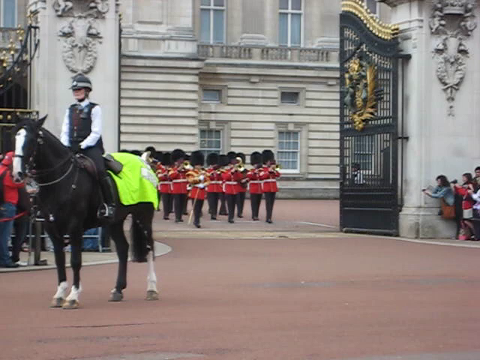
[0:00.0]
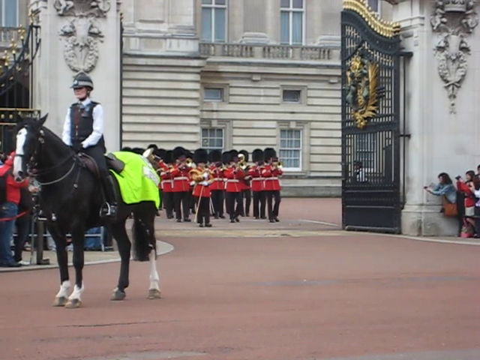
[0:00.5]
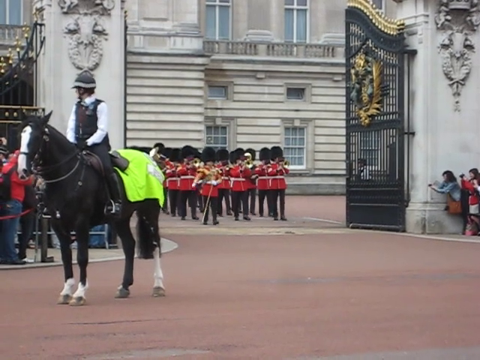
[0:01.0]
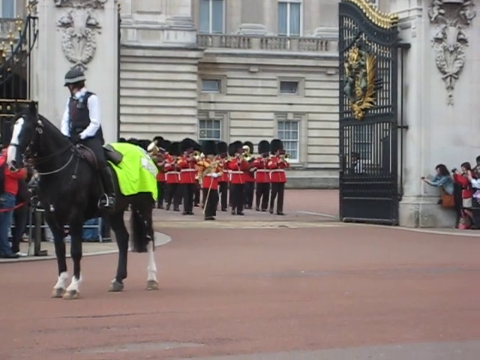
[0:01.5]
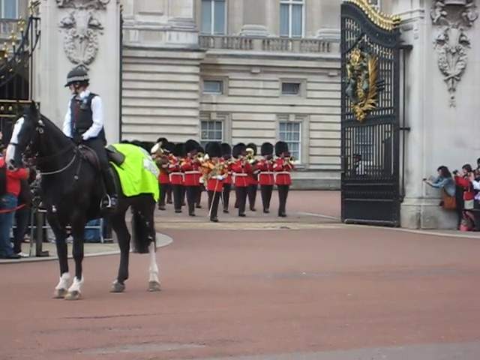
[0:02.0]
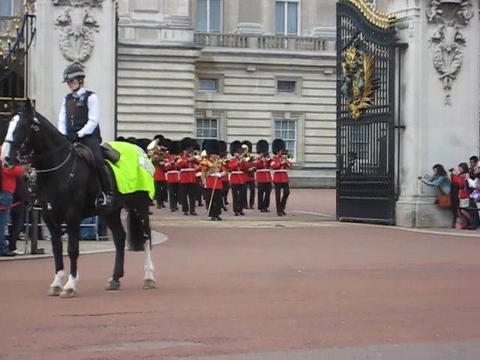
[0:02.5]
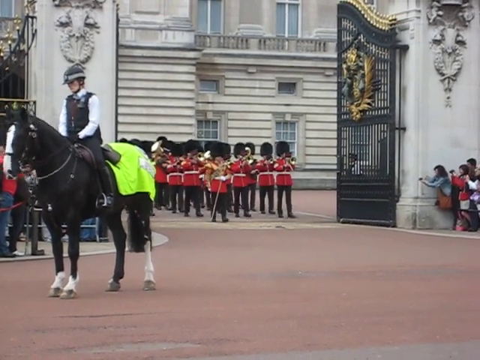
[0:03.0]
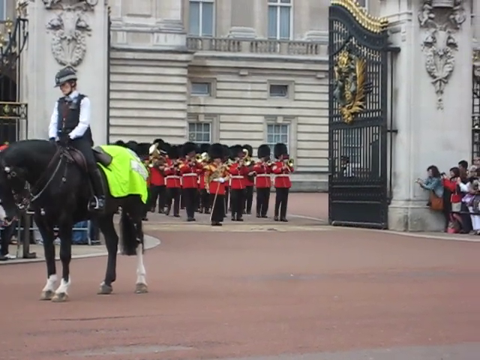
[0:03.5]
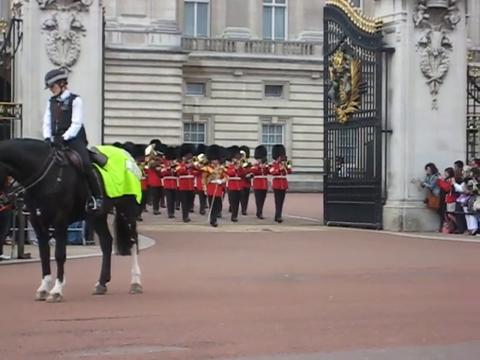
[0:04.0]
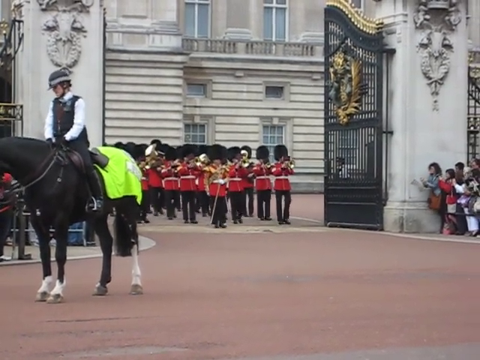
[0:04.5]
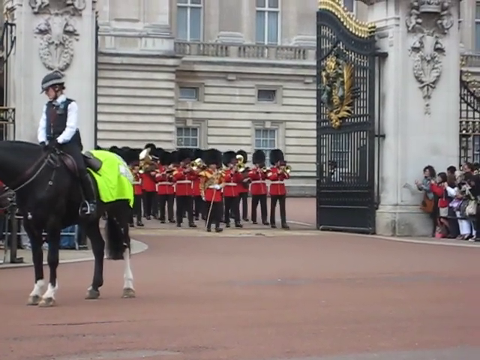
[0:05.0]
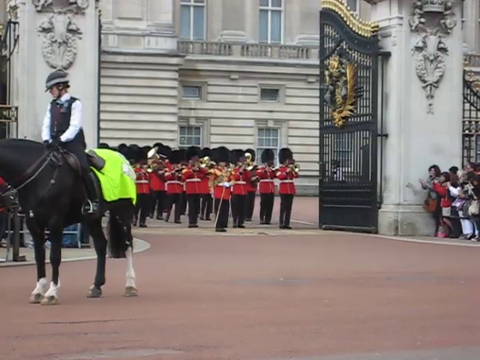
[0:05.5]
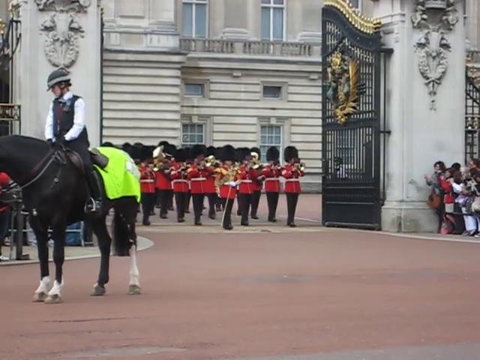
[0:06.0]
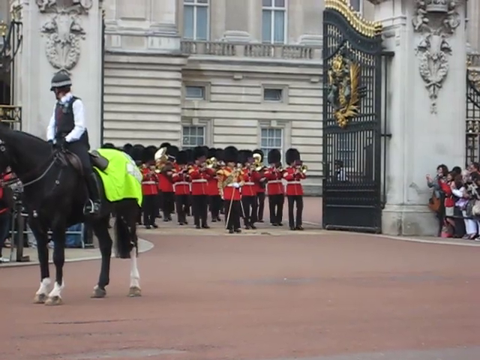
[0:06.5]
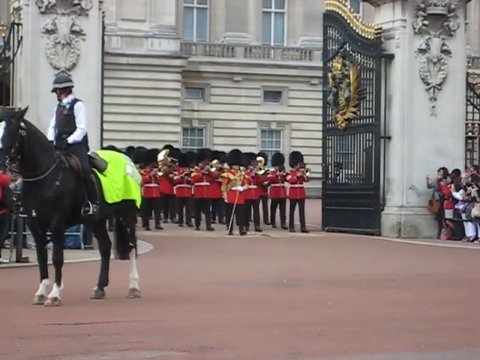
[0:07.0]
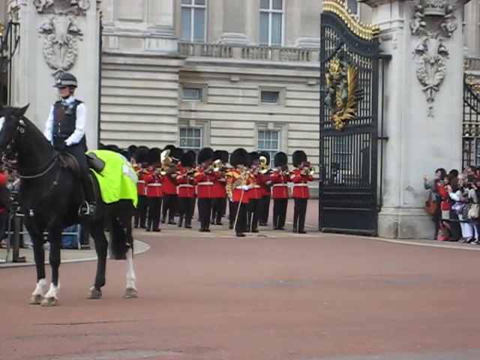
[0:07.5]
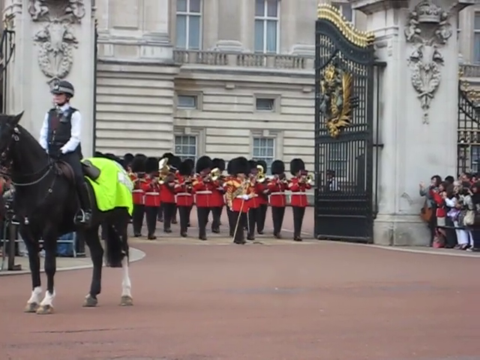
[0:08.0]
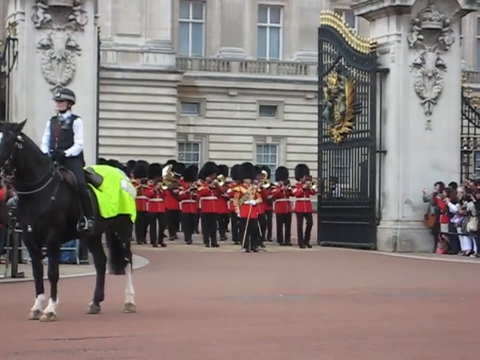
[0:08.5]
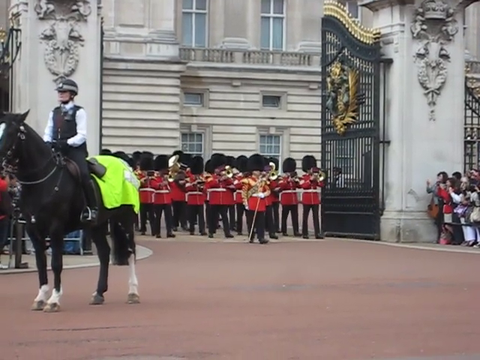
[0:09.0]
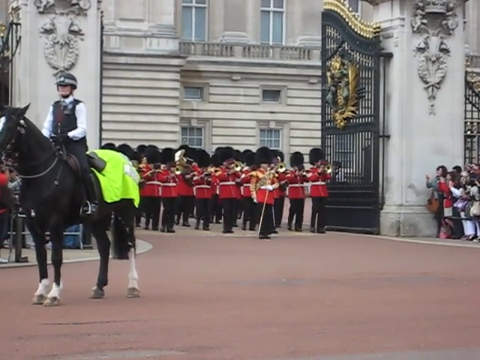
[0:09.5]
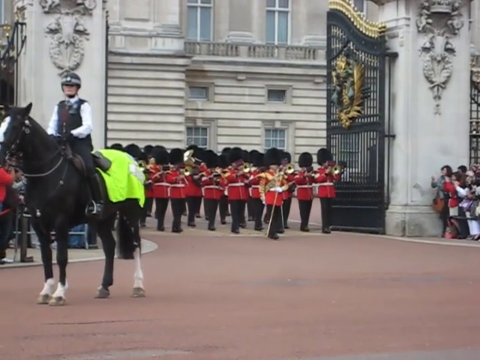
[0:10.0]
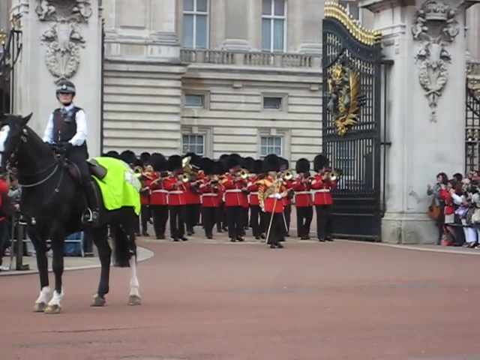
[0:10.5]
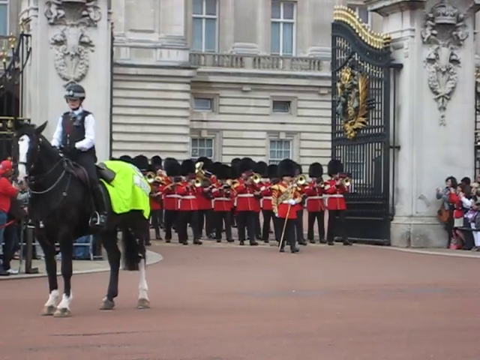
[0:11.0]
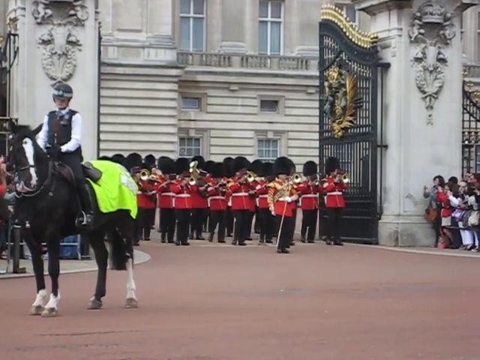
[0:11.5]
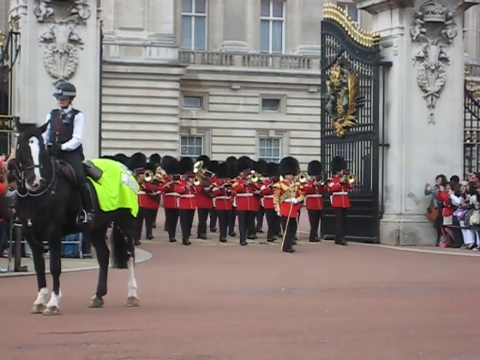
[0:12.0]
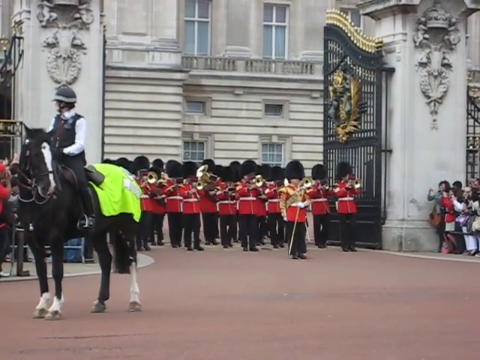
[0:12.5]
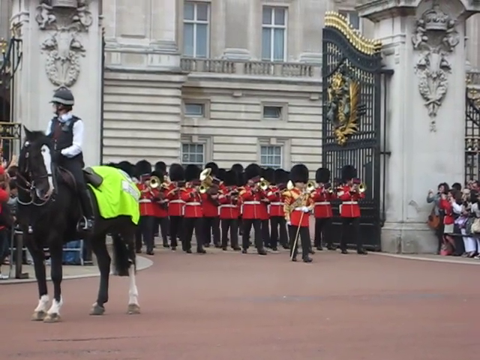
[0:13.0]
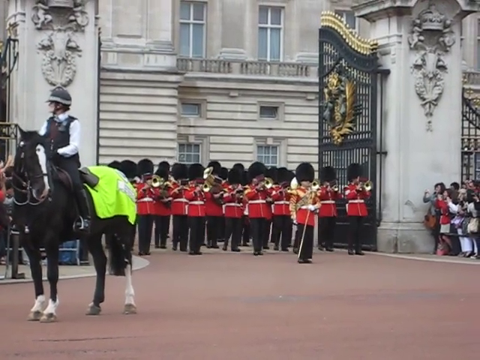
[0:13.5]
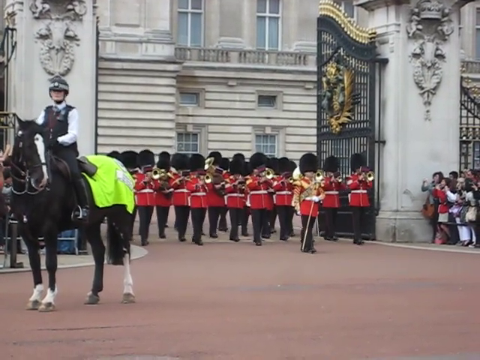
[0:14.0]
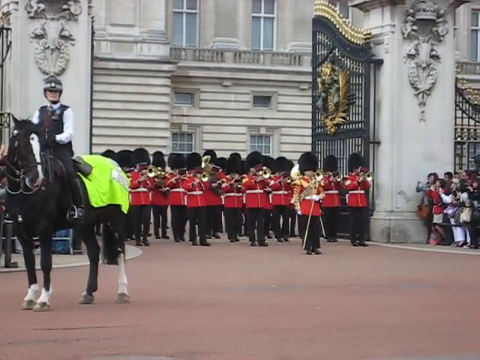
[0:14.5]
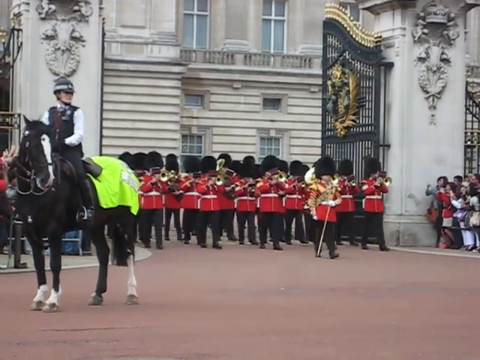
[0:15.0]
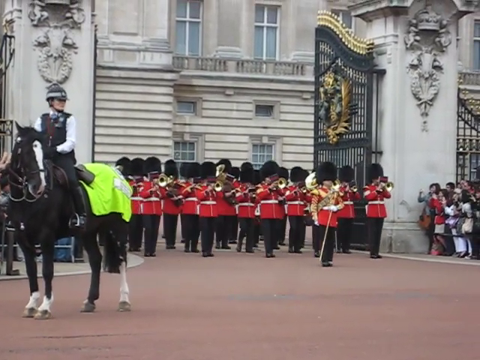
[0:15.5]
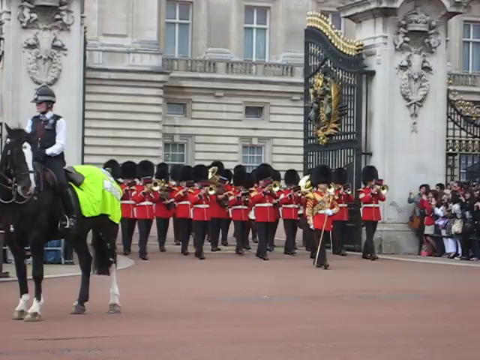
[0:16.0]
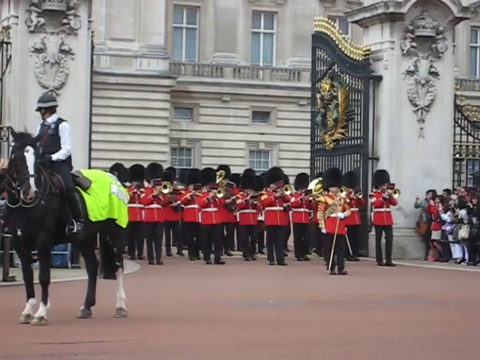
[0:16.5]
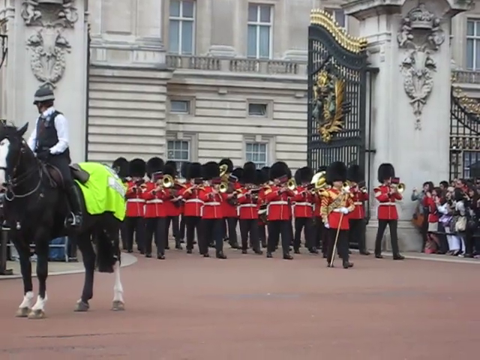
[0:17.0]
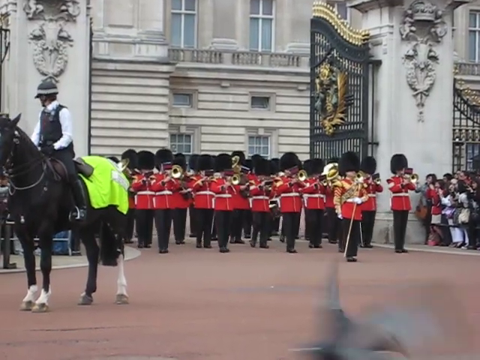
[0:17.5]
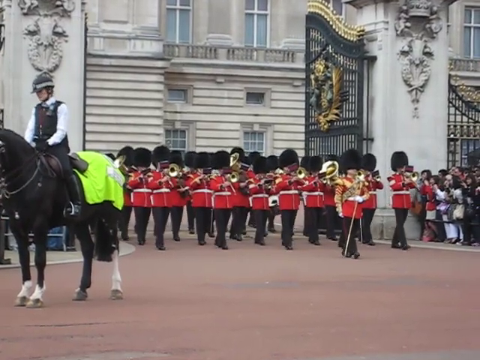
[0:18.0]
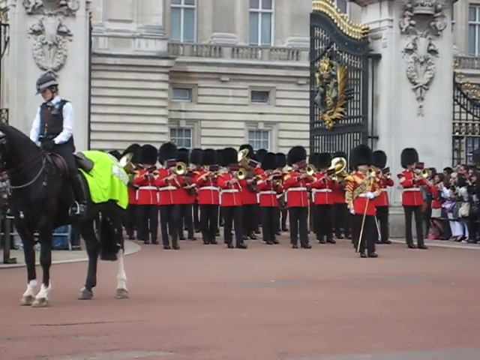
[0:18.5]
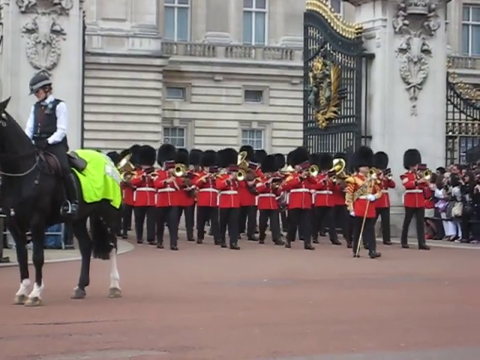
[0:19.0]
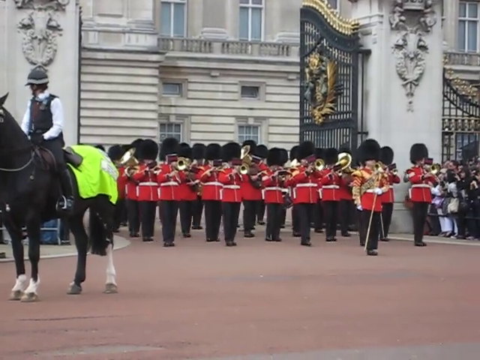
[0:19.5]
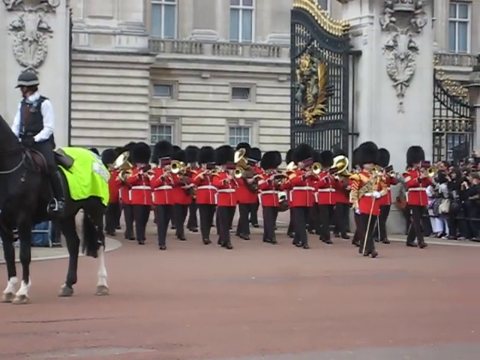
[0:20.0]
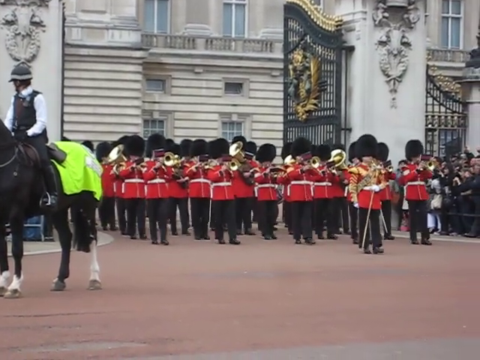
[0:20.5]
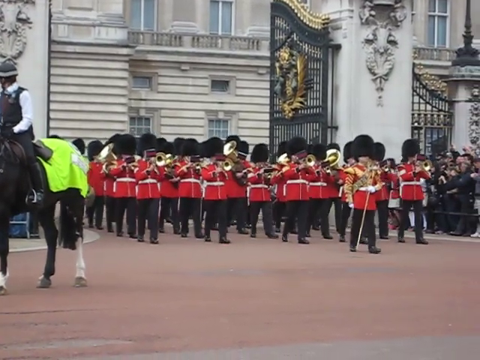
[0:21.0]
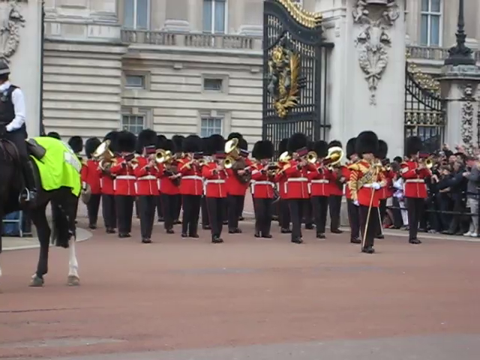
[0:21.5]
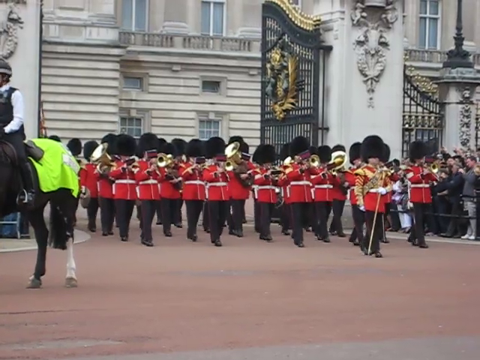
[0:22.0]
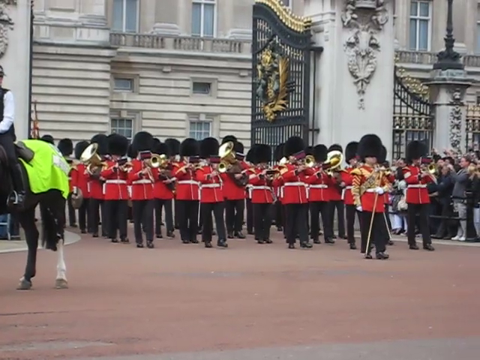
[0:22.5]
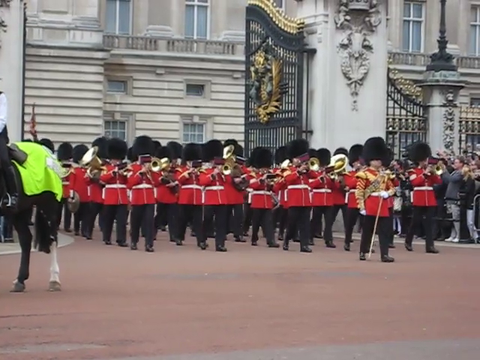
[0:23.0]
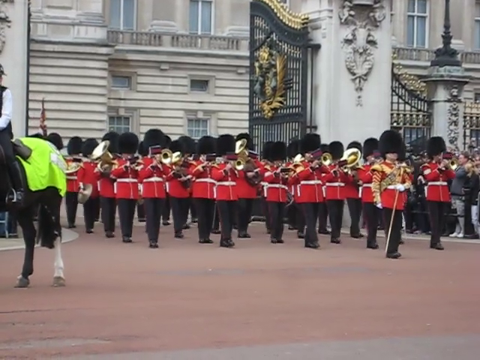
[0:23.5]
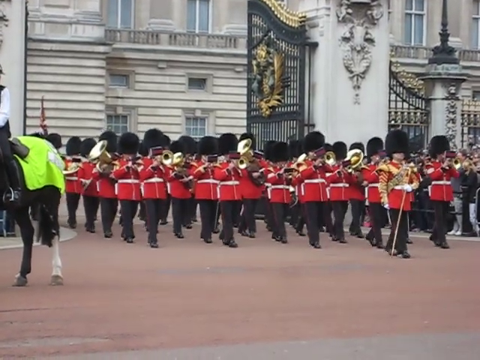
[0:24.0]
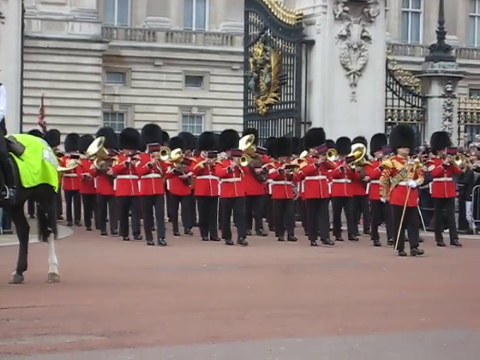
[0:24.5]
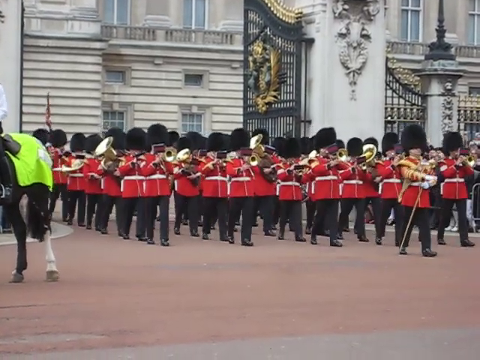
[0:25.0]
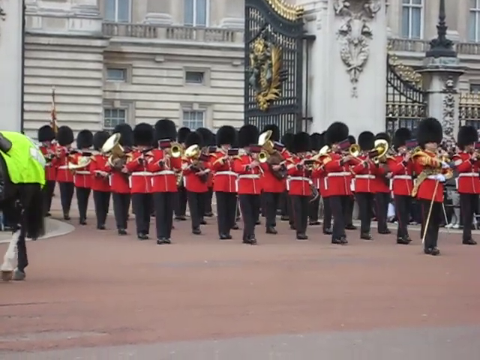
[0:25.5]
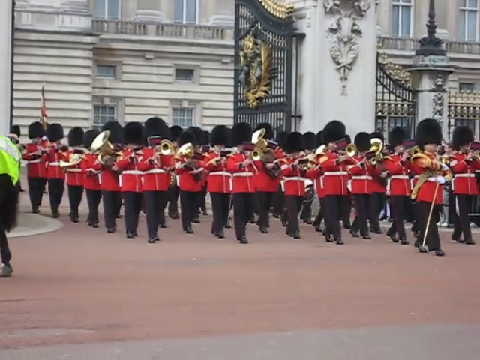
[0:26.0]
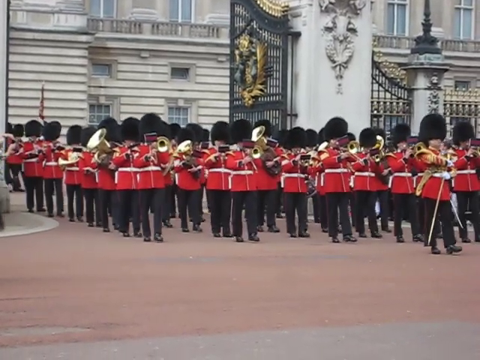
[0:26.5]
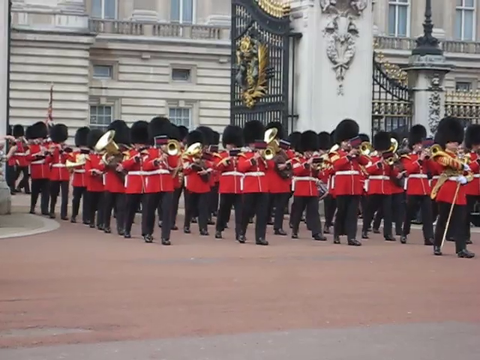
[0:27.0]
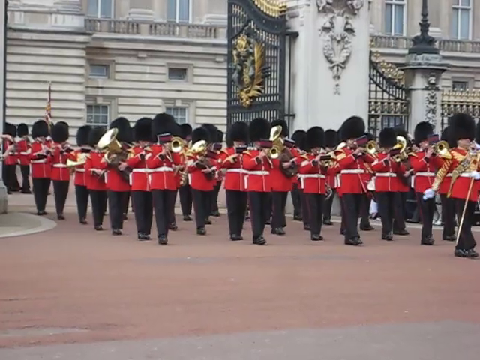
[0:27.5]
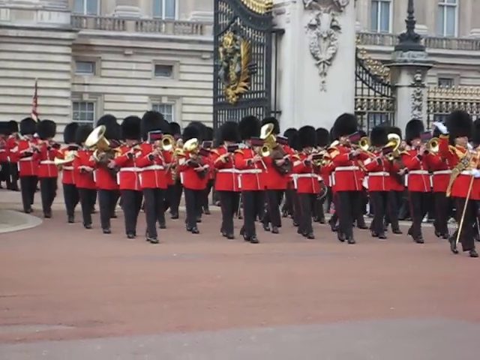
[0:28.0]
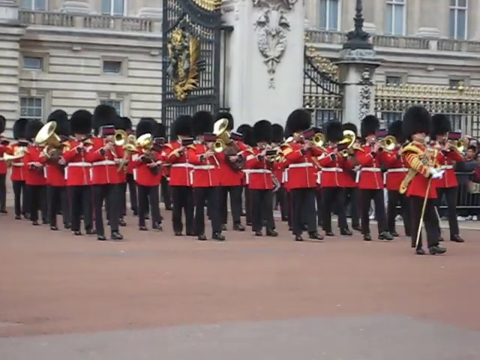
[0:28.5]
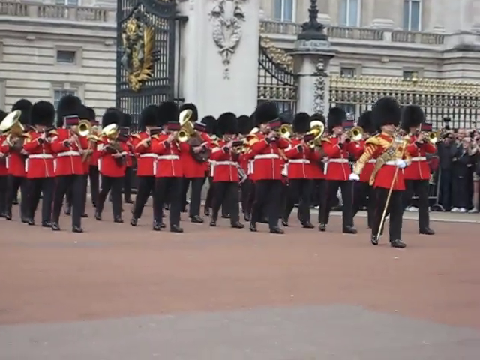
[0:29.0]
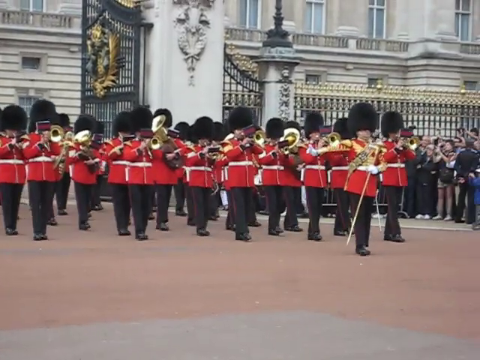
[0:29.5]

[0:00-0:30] The Queen's Guard is outside Buckingham Palace in London, England, on an overcast day. On the far left, a guard is sitting on top of a horse; she is a female, and she looks around behind her. The horse is black and white. The gates to Buckingham Palace are wide open; they look to be about 30 feet tall and are made of black and gold metal. The Queen's Guard comes walking very slowly out of the open gates. These guards play in a marching band, playing trumpets, tubas and trombones. They wear red blazers, black pants, black boots and tall black furry hats. Tourists are standing on either side of the open gate, watching the band walk forward while playing their instruments.